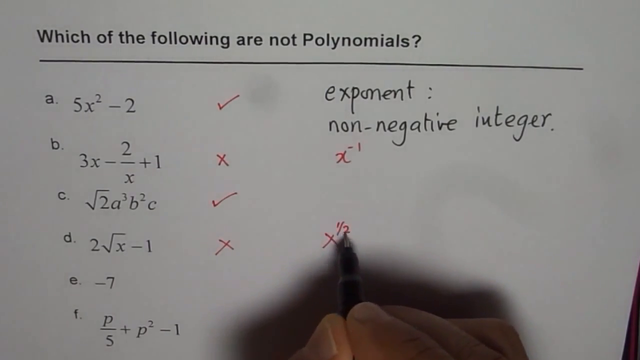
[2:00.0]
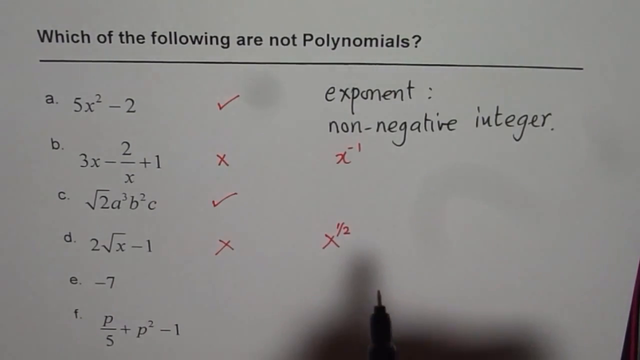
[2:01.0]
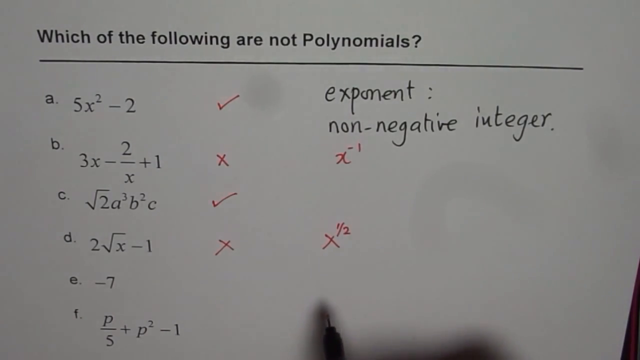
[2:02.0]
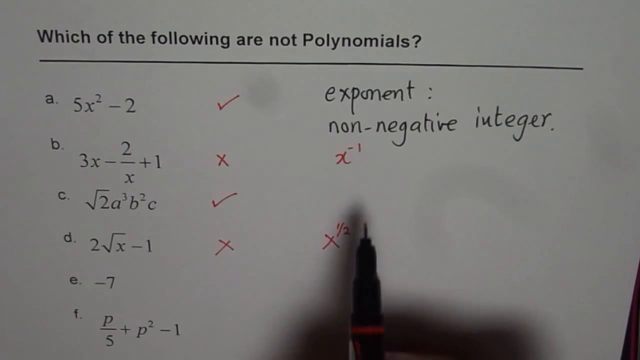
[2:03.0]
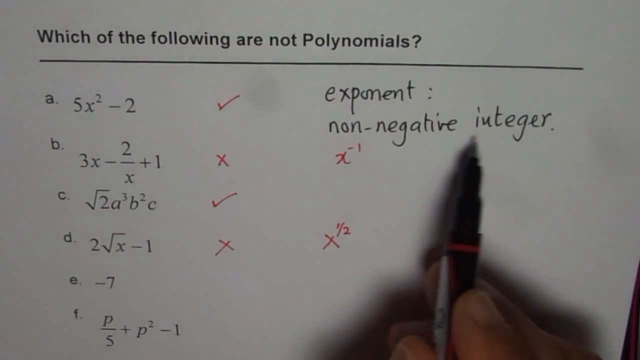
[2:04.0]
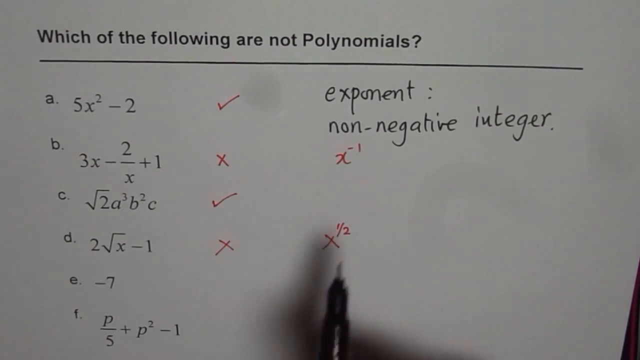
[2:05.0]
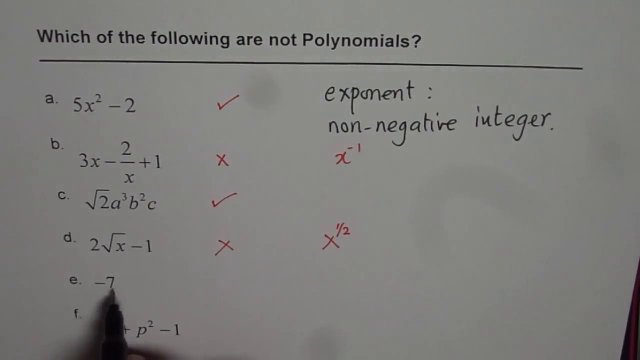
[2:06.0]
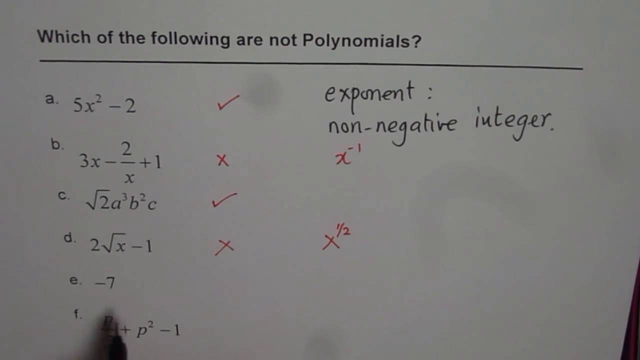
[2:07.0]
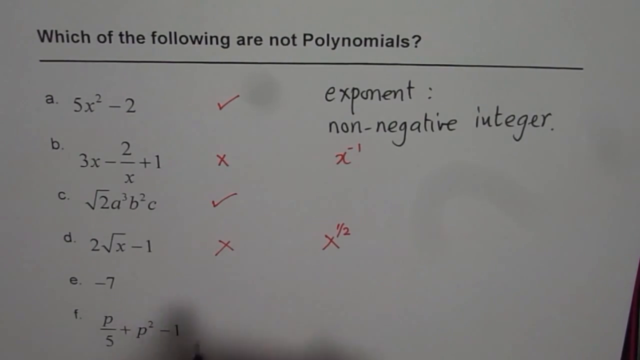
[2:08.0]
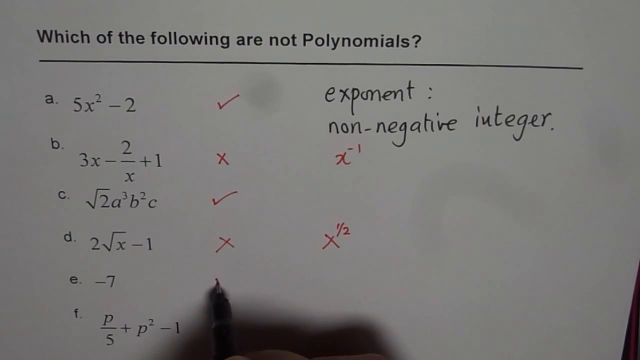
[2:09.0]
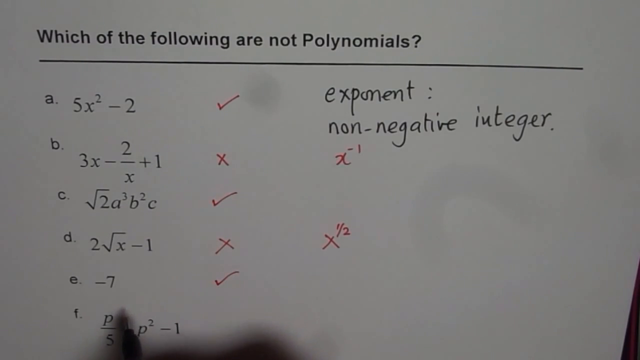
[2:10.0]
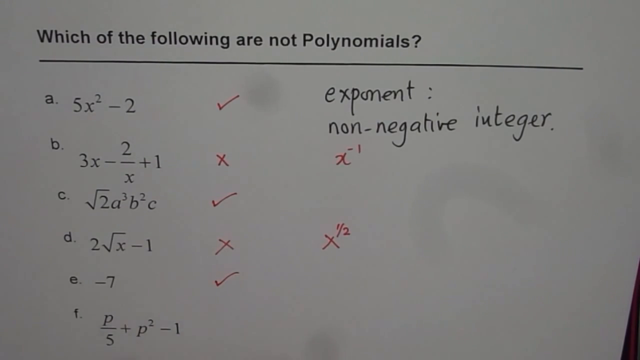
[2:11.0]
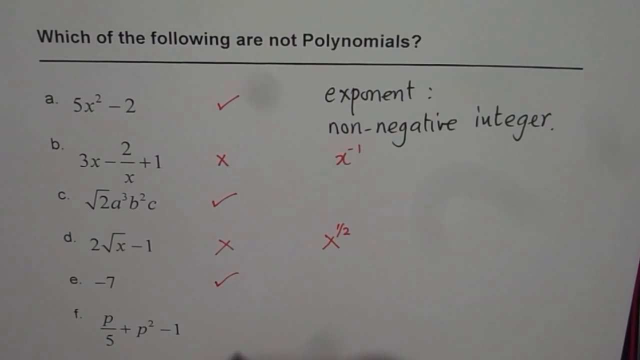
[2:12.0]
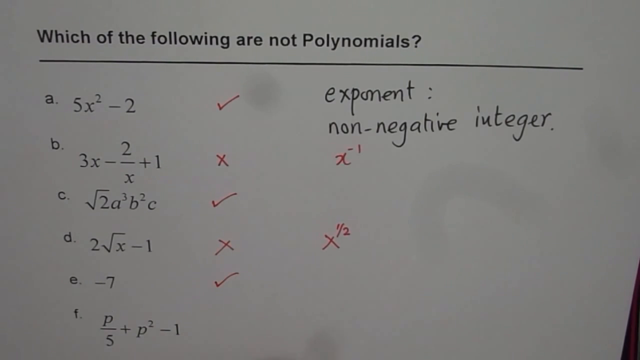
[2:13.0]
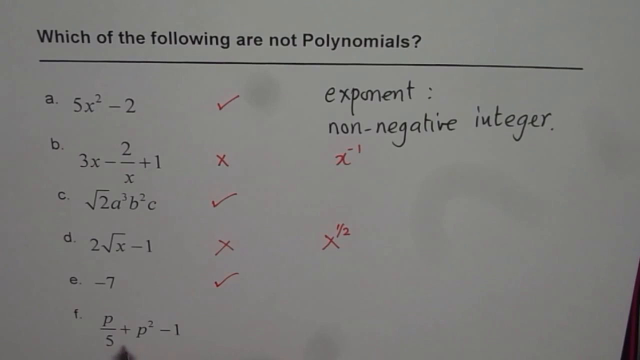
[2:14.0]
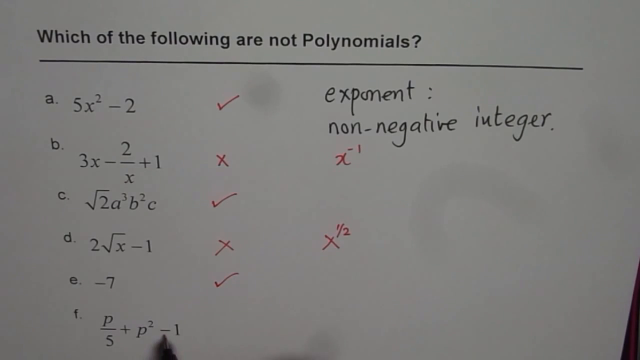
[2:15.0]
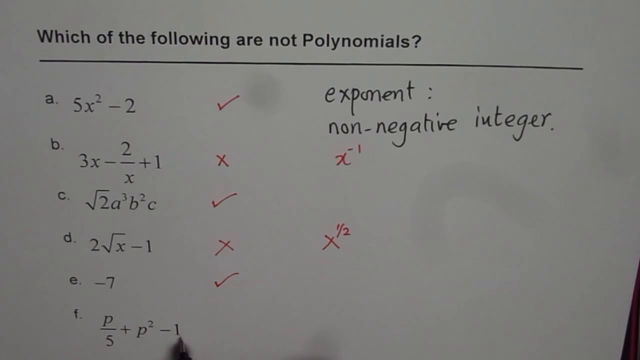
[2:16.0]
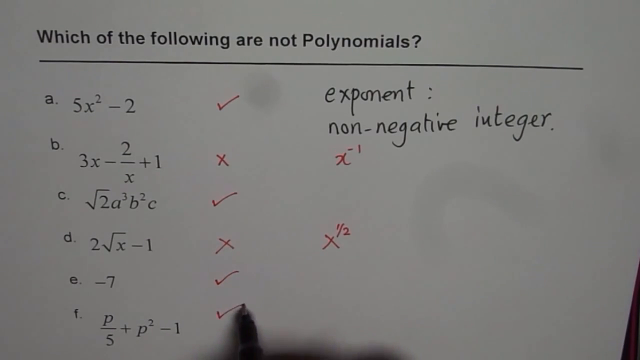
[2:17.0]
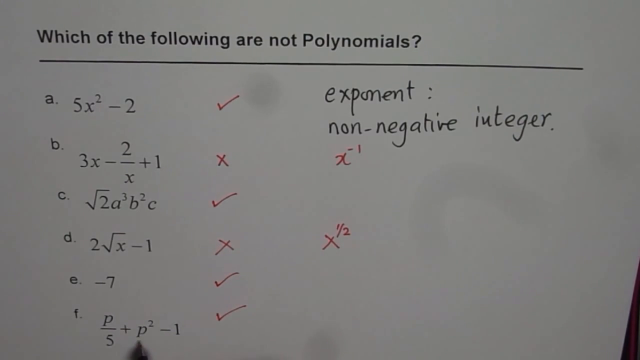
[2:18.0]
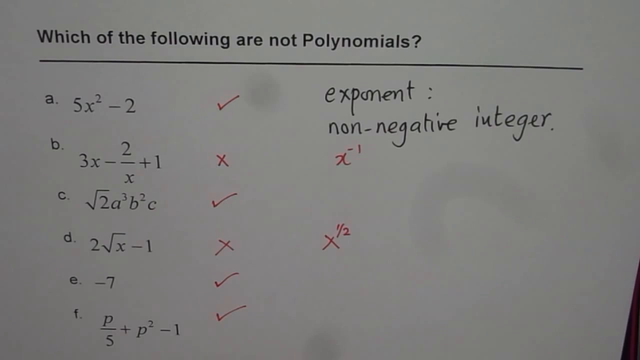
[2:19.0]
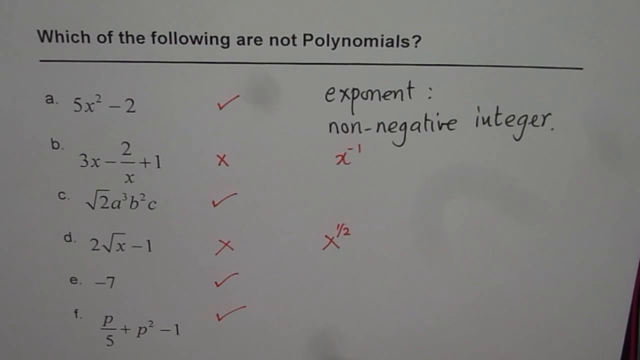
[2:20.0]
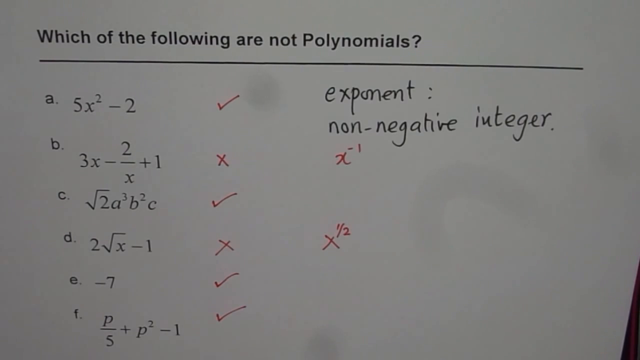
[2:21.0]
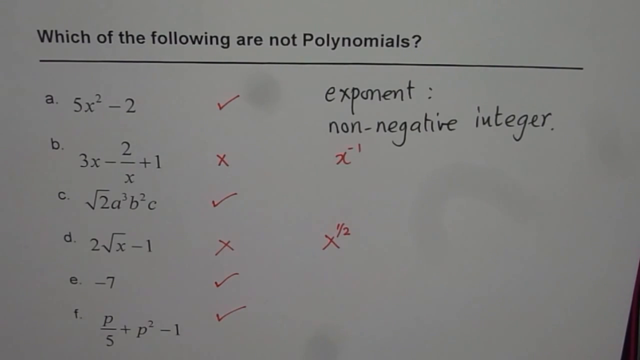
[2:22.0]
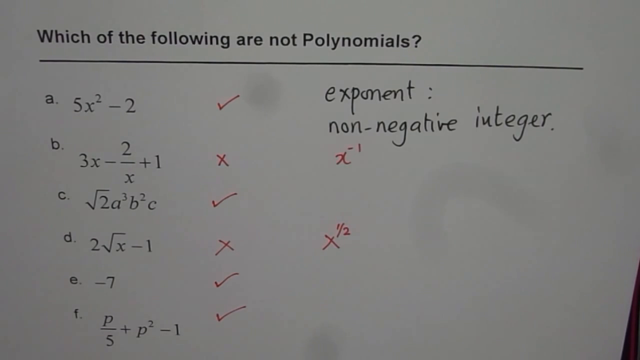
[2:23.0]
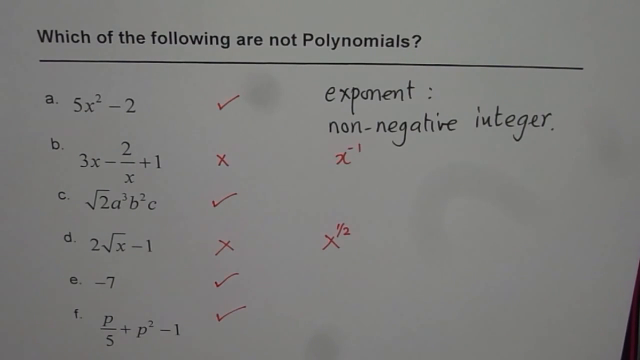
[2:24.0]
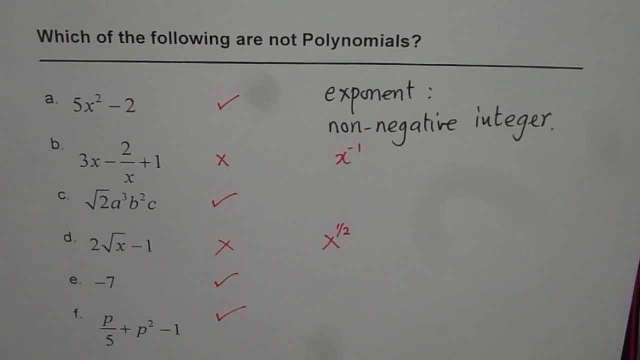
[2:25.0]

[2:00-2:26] After the red X and the x to the half power are written, the pen points at "integer" up at the top right, then goes down to E, negative 7, and puts a red check beside it. It then moves to the bottom expression, p over 5 plus p to the second power minus 1, and puts a red check next to it, then points at the 5, the p and the 2. The white piece of paper shows the bold black heading of average size, "which of the following are not polynomials", with a black line under it. Down the side, A has a red check, B has a red X, C has a check, D has a red X, E has a red check and F has a red check, so four of the six have red checks and two have Xs. On the right side are the red x with a negative 1 power and the x to the half power.